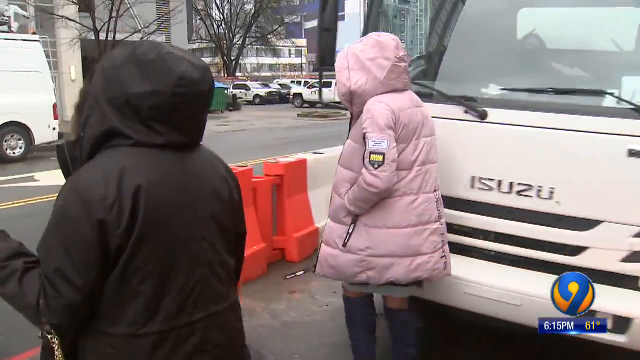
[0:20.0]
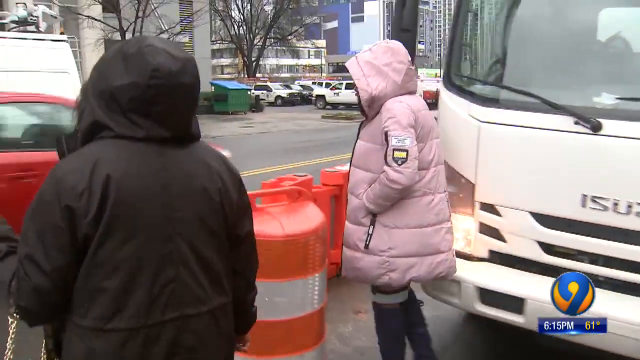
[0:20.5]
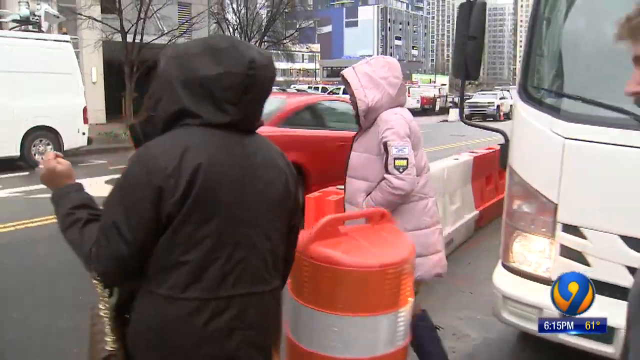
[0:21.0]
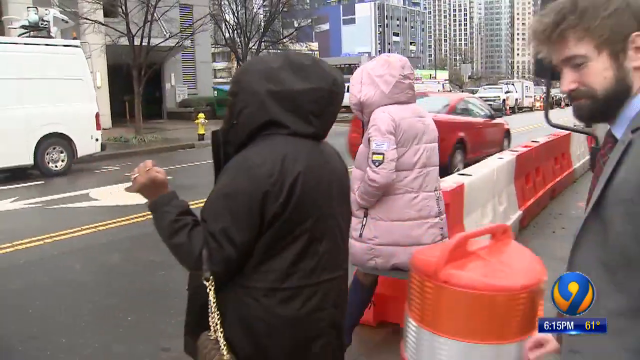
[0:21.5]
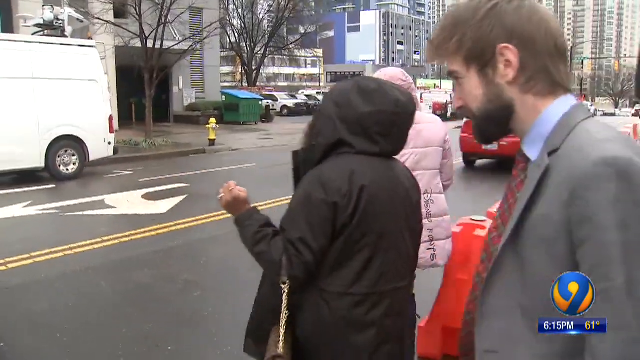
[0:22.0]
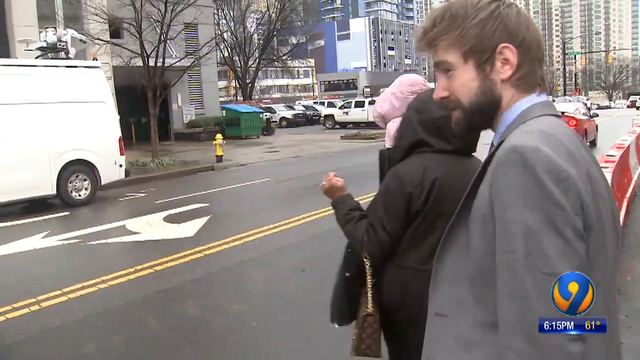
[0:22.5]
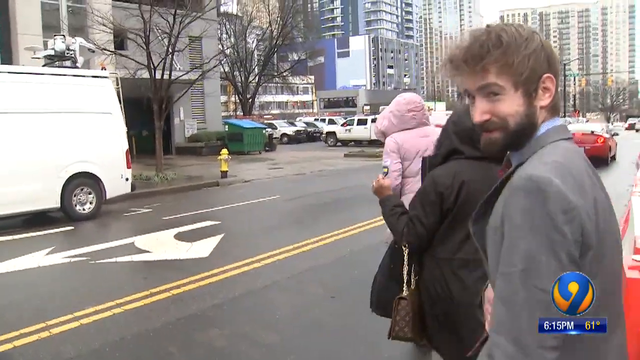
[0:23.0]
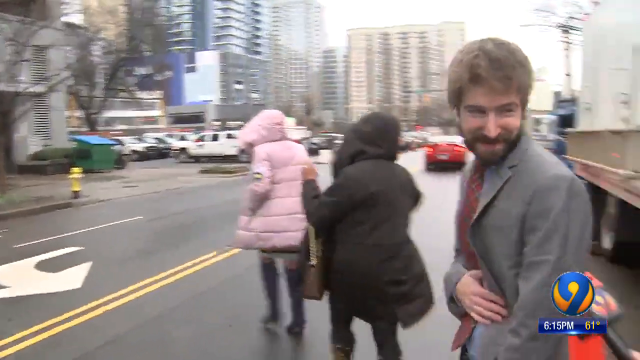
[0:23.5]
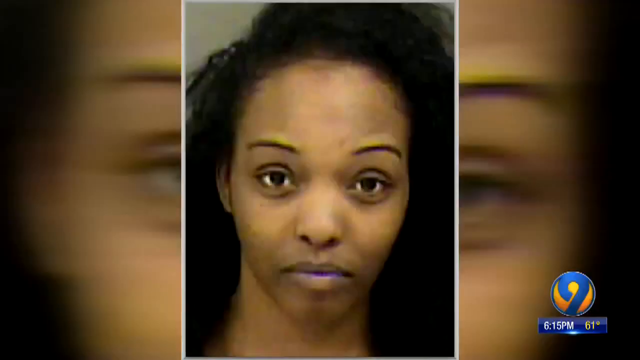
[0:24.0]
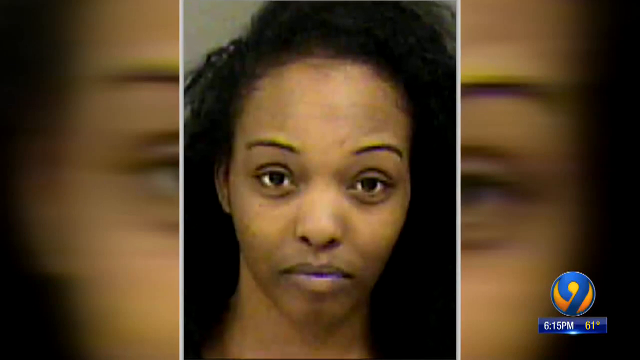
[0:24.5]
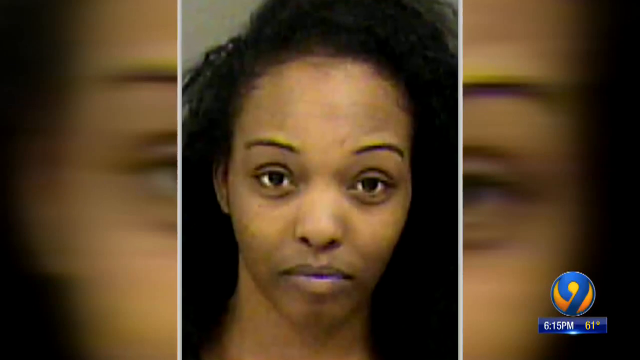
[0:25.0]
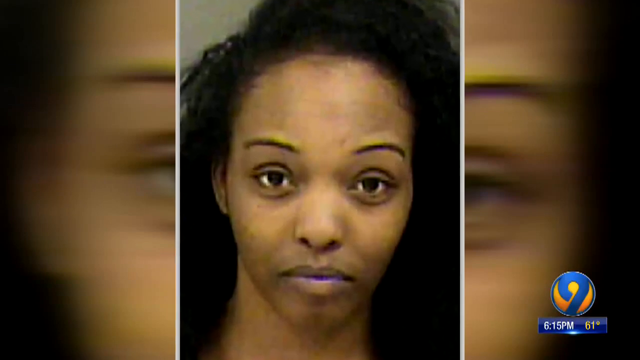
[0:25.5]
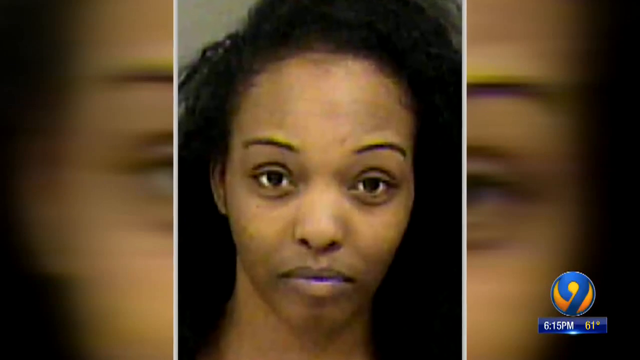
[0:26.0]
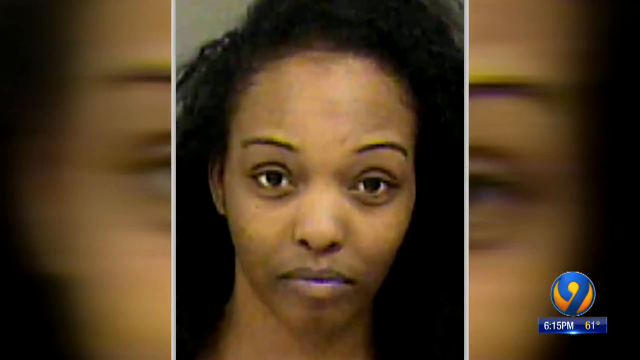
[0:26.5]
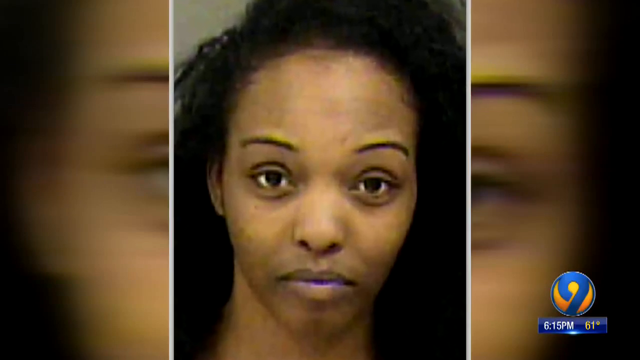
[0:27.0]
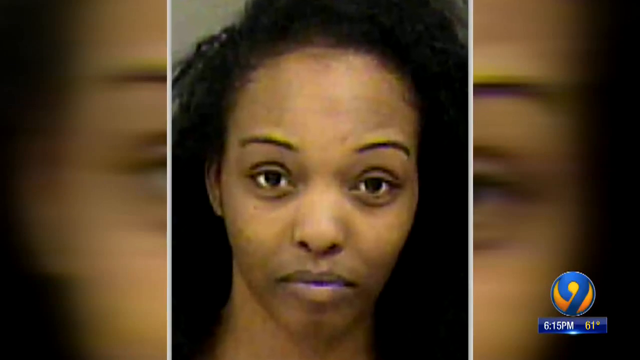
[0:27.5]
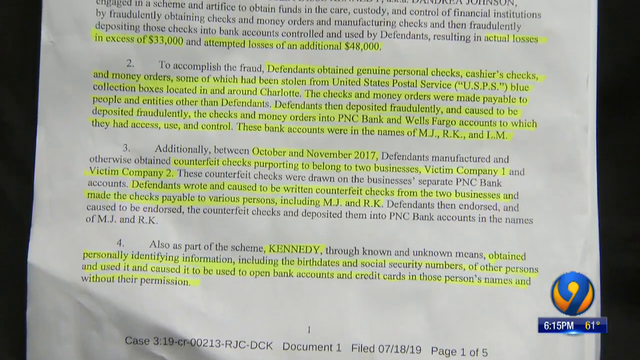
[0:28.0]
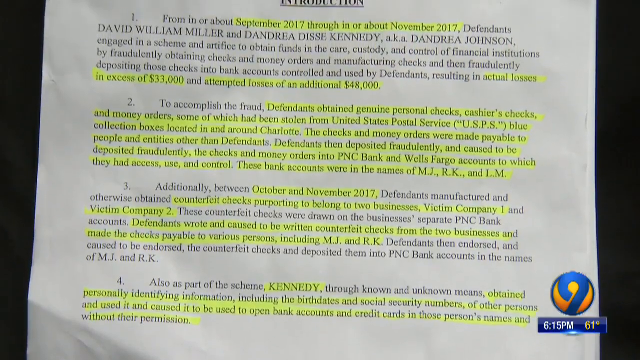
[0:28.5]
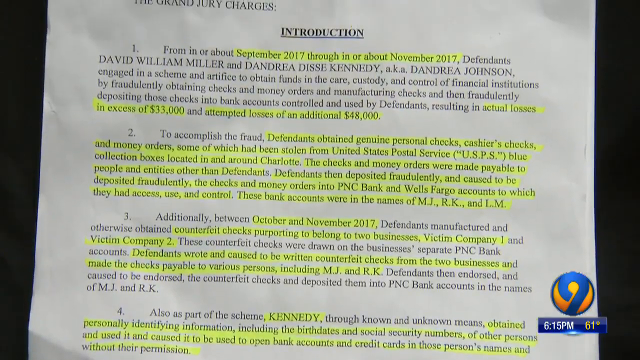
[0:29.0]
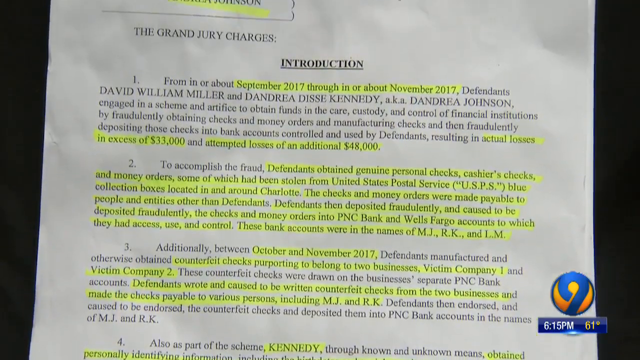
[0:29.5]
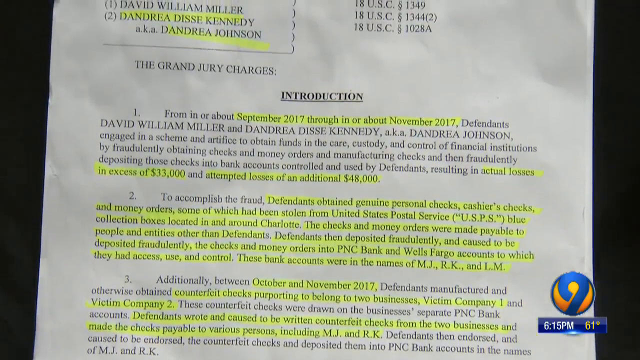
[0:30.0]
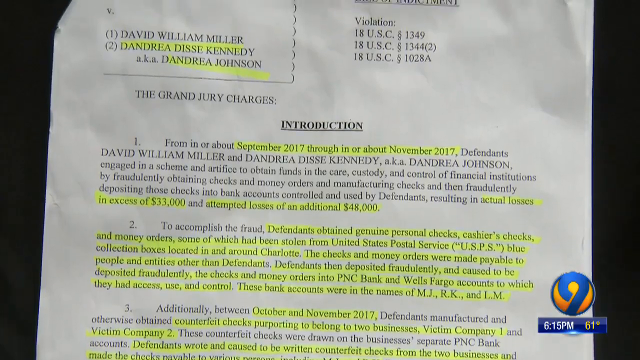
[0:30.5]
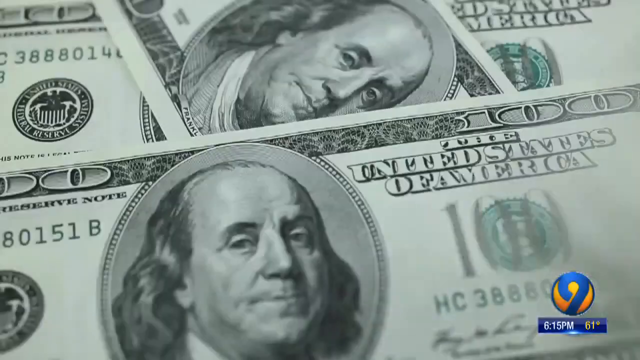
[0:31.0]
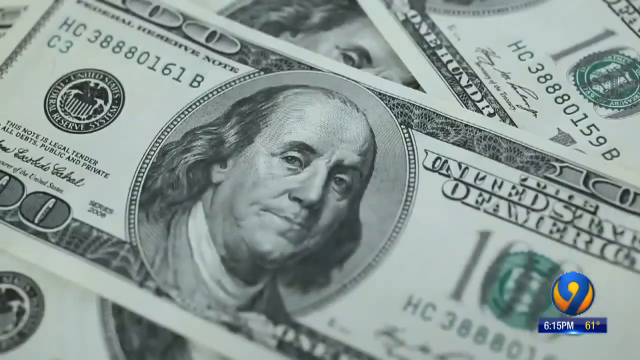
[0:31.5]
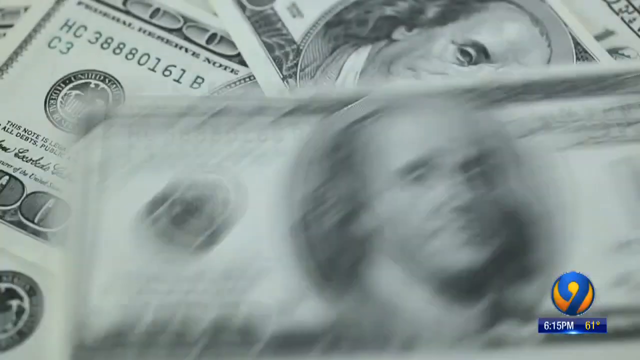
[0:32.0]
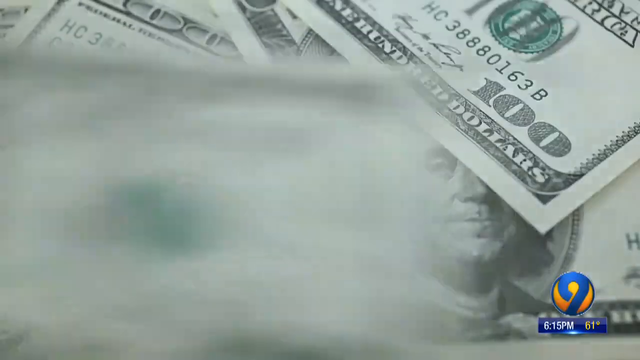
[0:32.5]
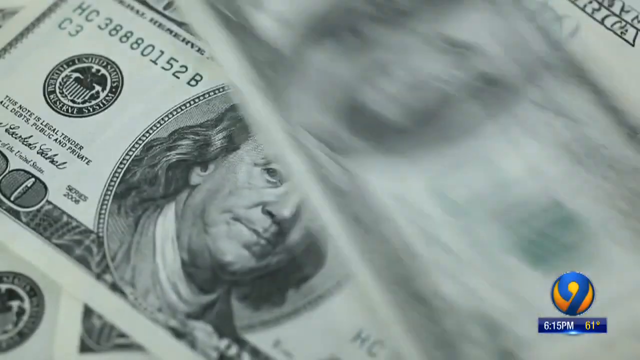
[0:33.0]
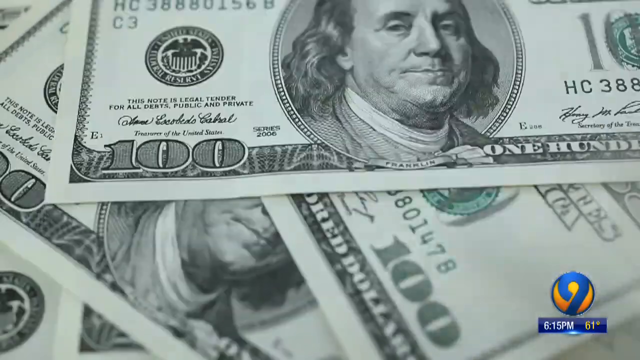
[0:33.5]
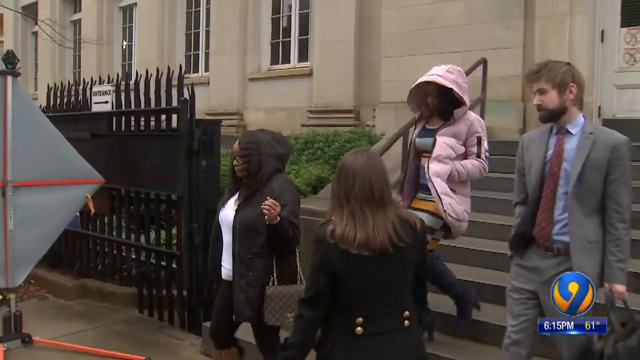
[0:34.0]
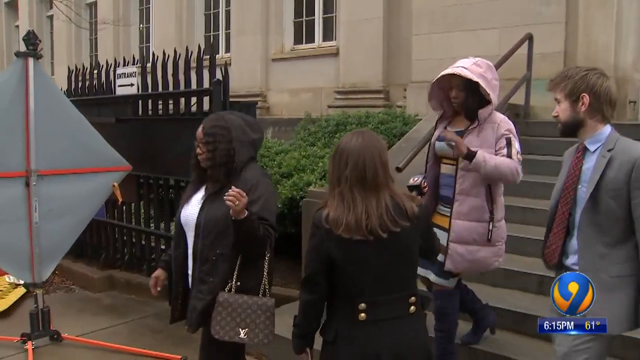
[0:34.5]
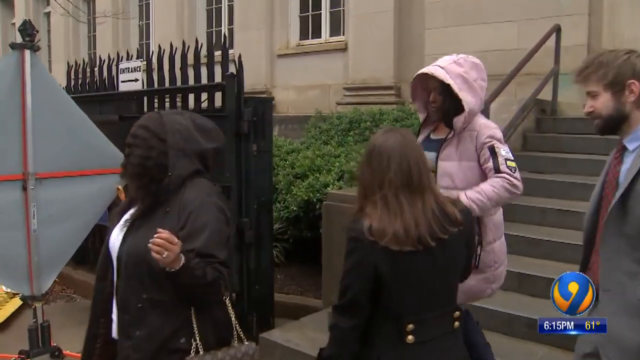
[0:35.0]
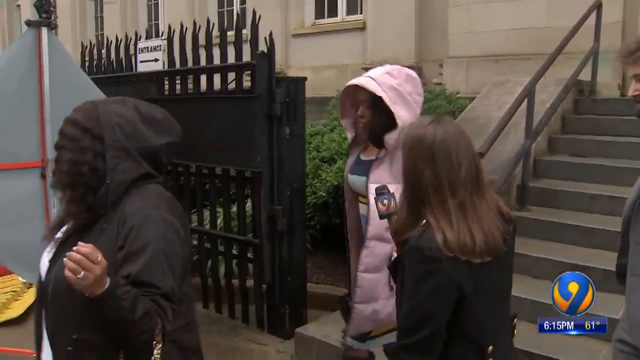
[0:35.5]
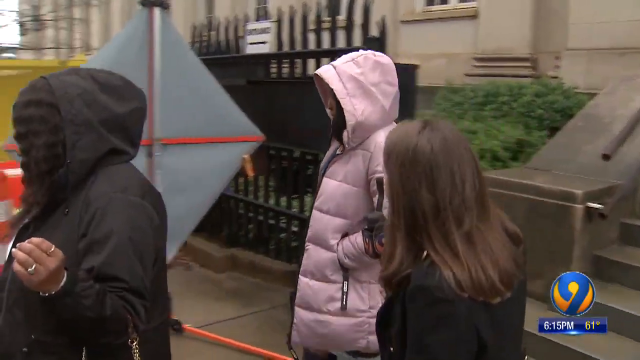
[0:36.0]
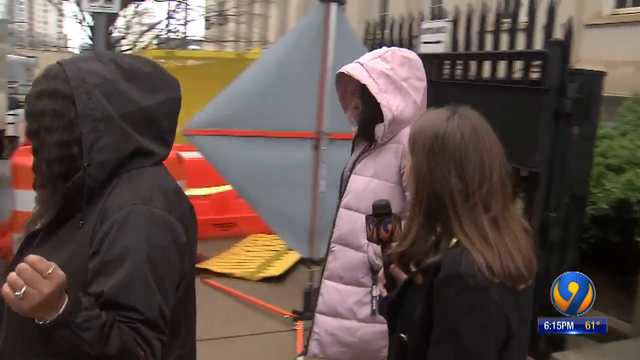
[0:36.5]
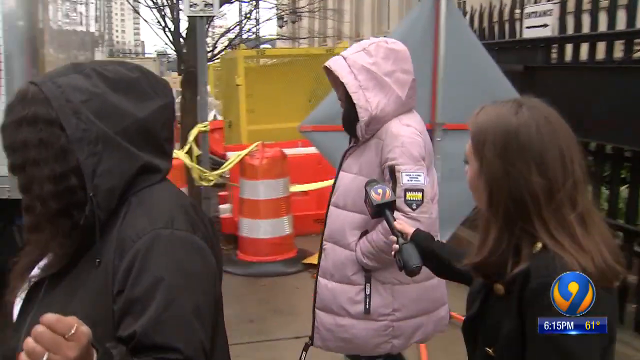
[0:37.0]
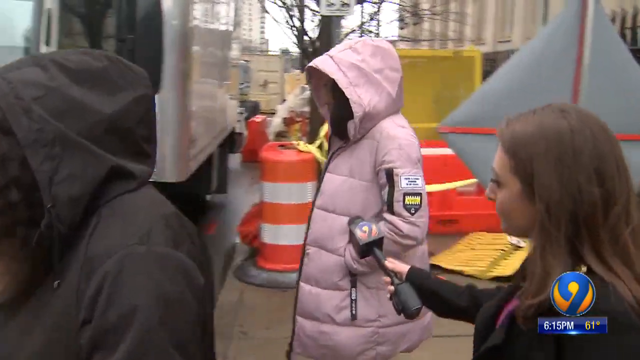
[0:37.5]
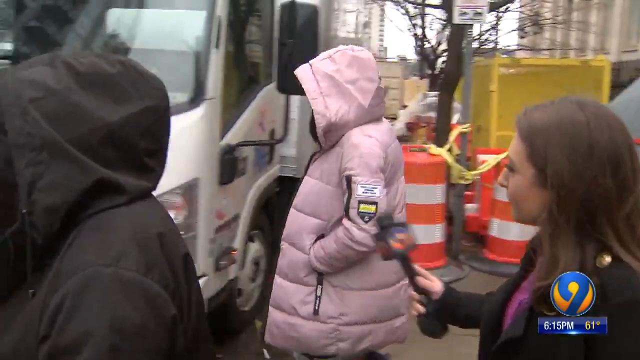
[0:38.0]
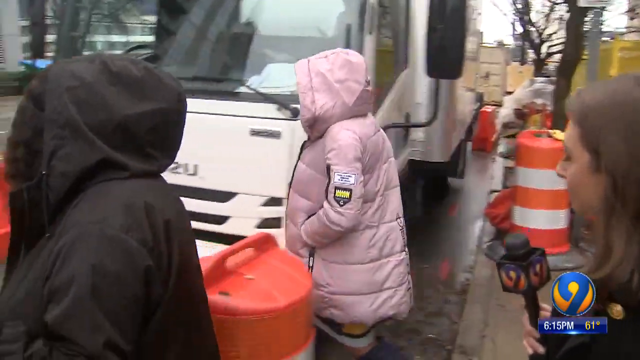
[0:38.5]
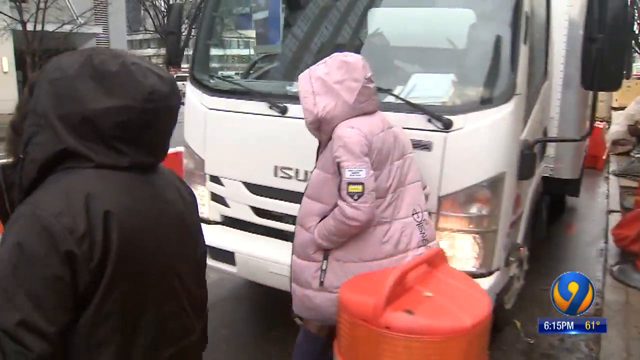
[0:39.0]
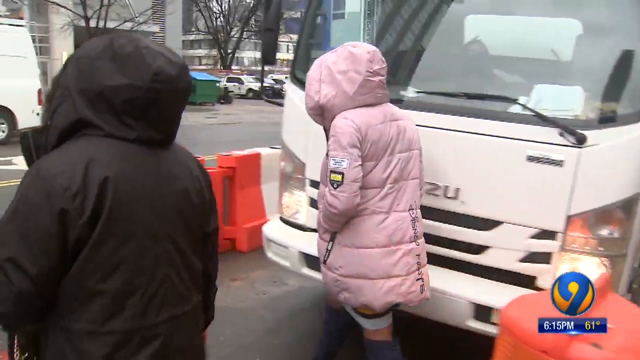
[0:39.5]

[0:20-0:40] Two ladies are shown: one wears a pink jacket, as it seems to be cold, and the other wears a black jacket. There are cones on the road, and next to them is what seems to be a big car, with other cars around the area. Behind the two ladies is a white man with brown hair and a beard, wearing what appears to be a grey suit. A red car passes in front of the ladies, and they all cross the road. The scene changes to a picture of a Black woman with eyebrows in a single line, a very small nose and a lot of hair; the way the picture appears seems like that of a fugitive. Next, a document concerning the defendants David William Miller and Dandrea Dizzee Kennett appears; it has something to do with money, and its second paragraph includes "to accomplish the fraud, a defendant obtained genuine personal checks". Then hundred-dollar notes are shown one after another. The scene returns to the two ladies coming out of what appears to be a court building, with a reporter who seems to be interested in the story.